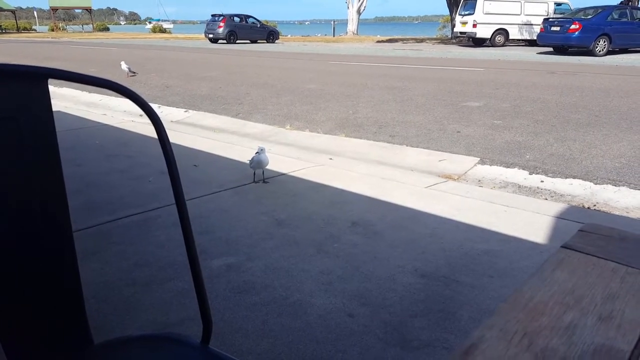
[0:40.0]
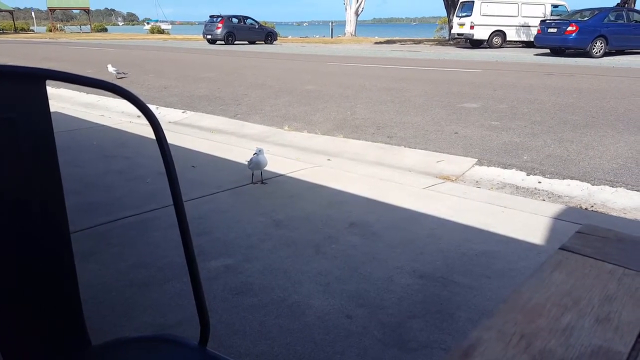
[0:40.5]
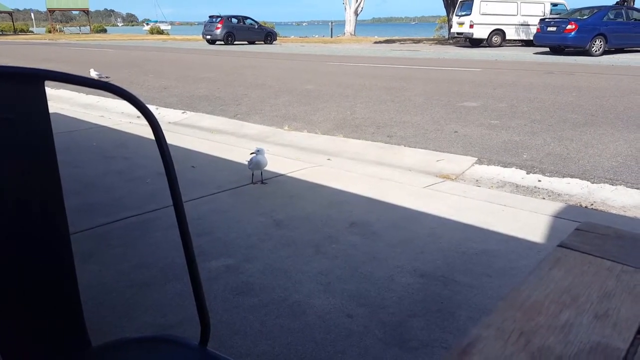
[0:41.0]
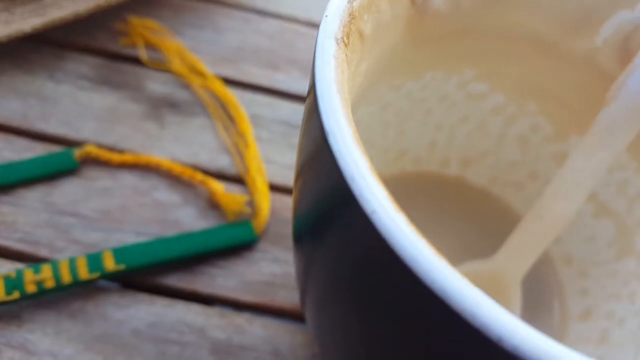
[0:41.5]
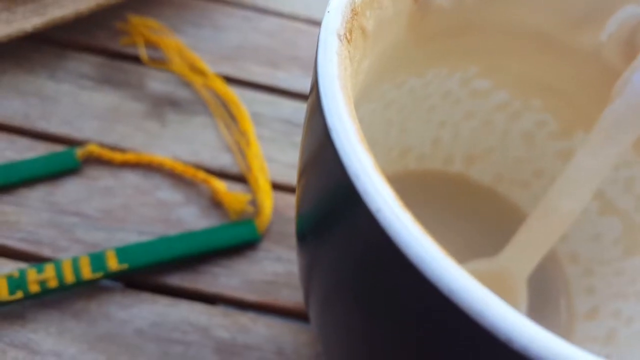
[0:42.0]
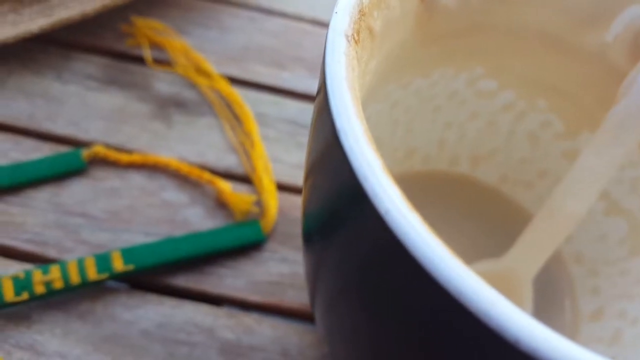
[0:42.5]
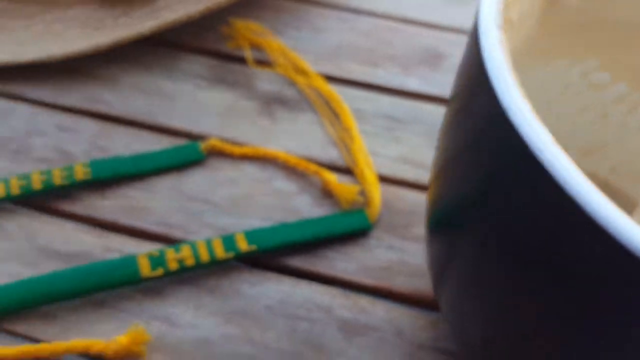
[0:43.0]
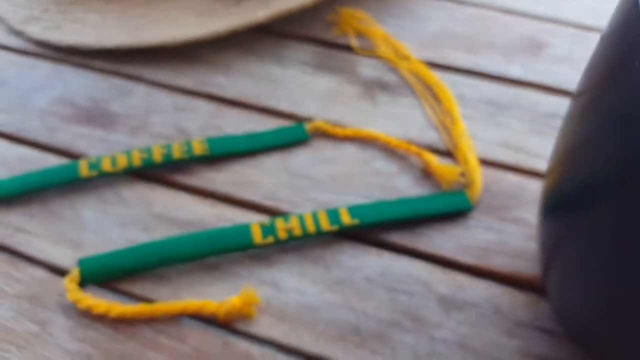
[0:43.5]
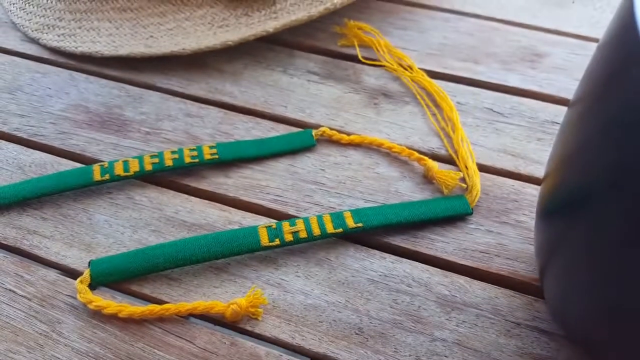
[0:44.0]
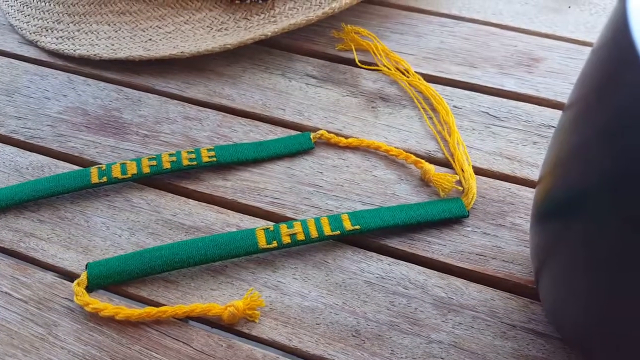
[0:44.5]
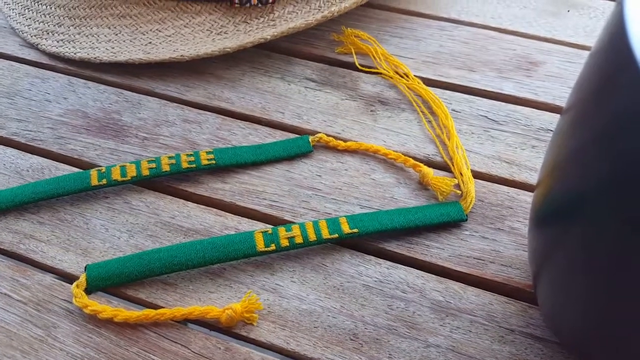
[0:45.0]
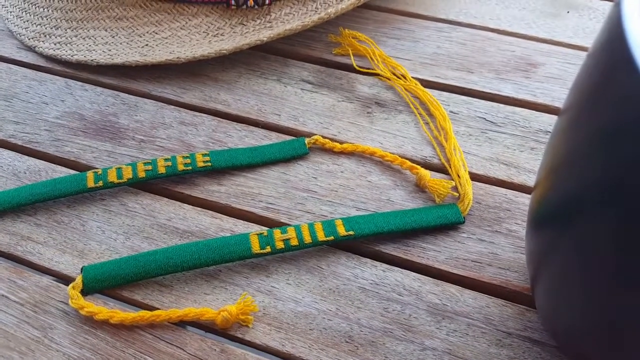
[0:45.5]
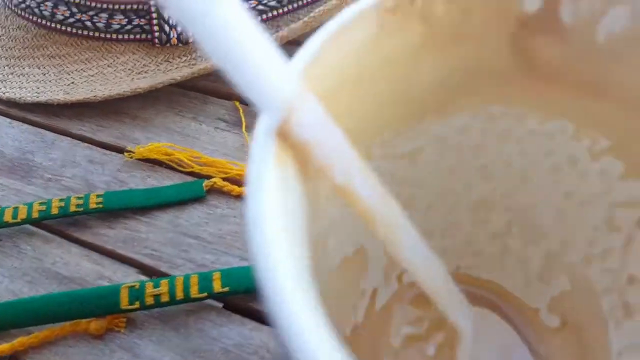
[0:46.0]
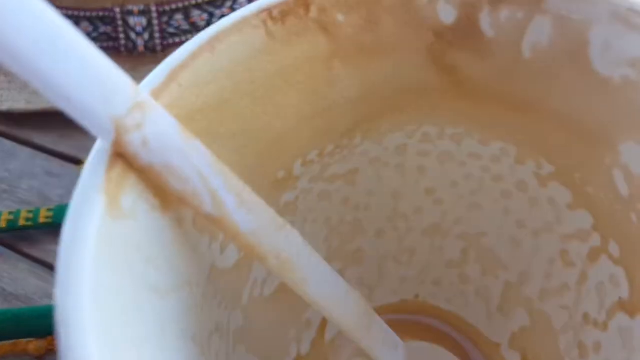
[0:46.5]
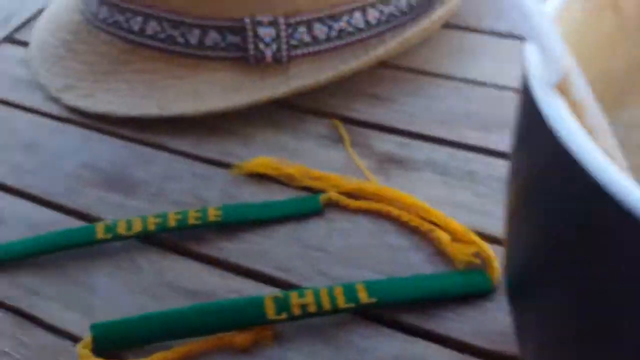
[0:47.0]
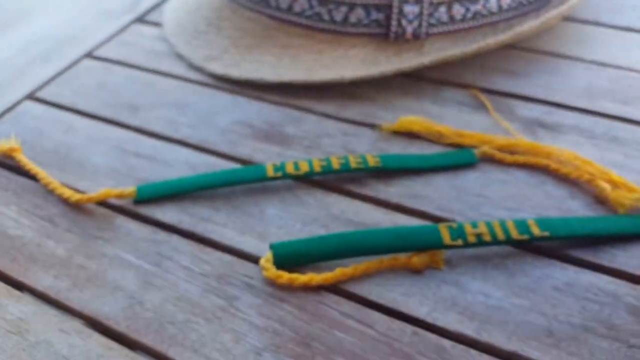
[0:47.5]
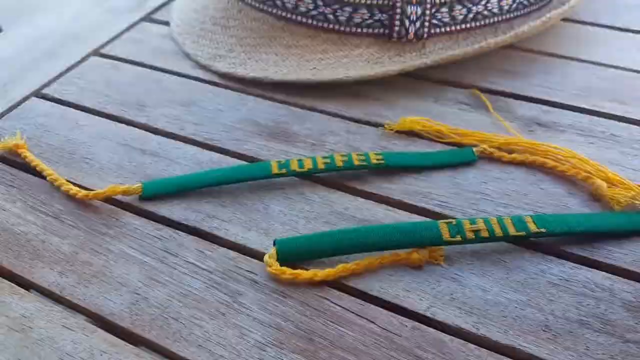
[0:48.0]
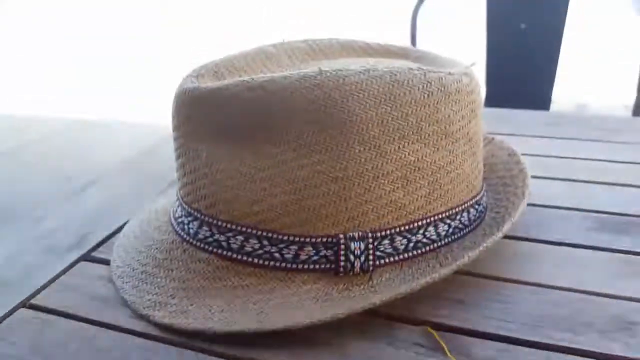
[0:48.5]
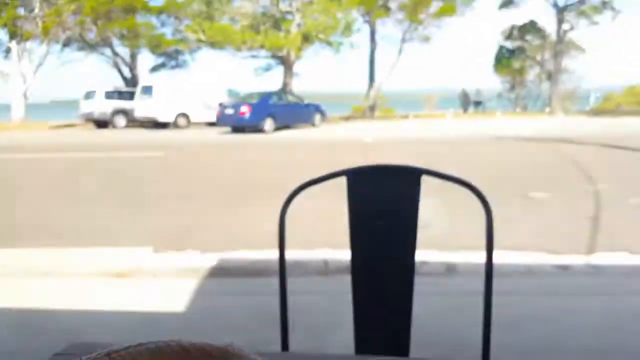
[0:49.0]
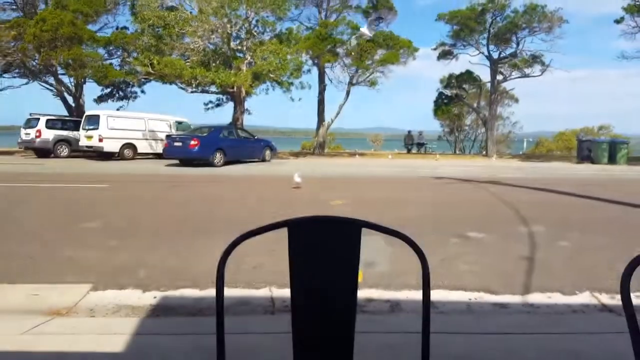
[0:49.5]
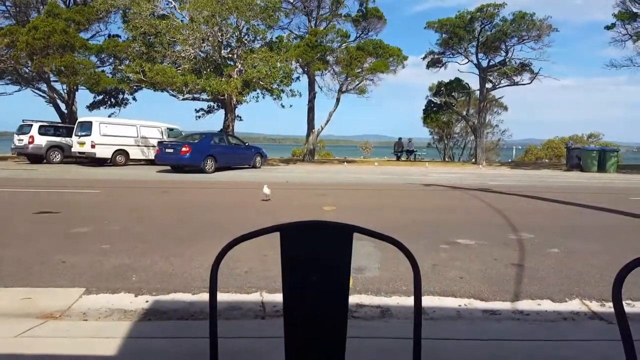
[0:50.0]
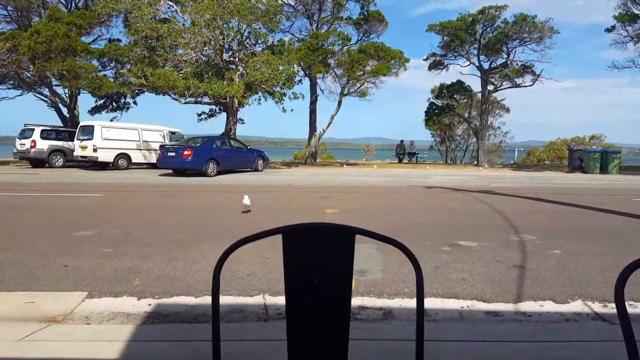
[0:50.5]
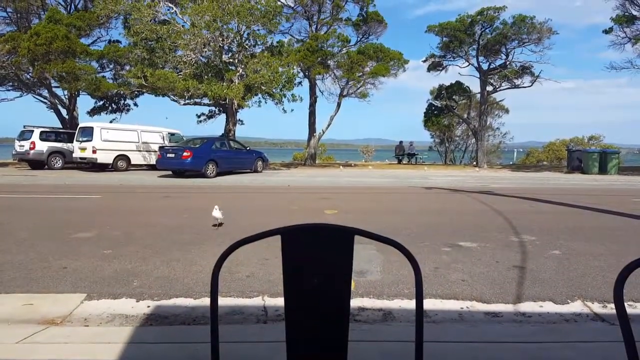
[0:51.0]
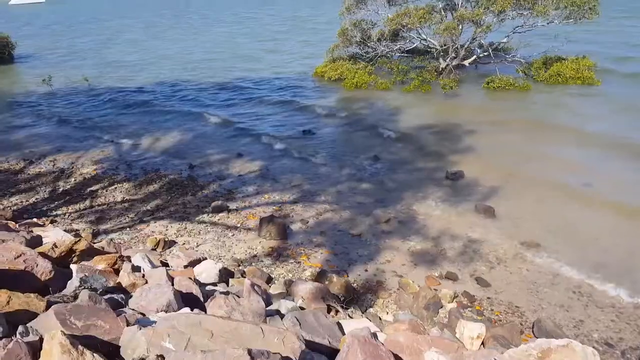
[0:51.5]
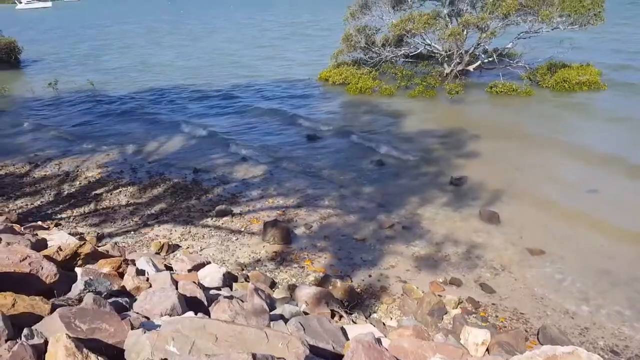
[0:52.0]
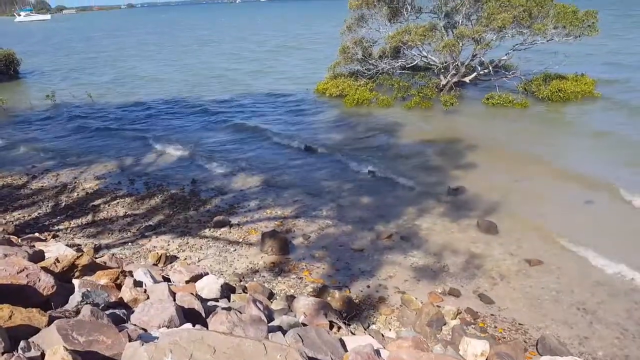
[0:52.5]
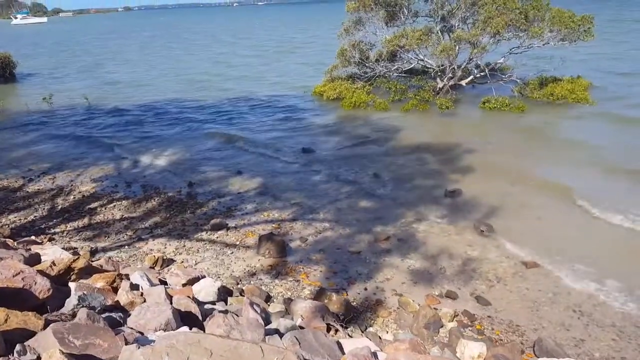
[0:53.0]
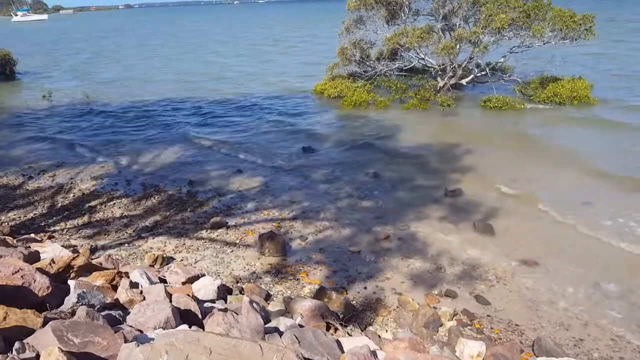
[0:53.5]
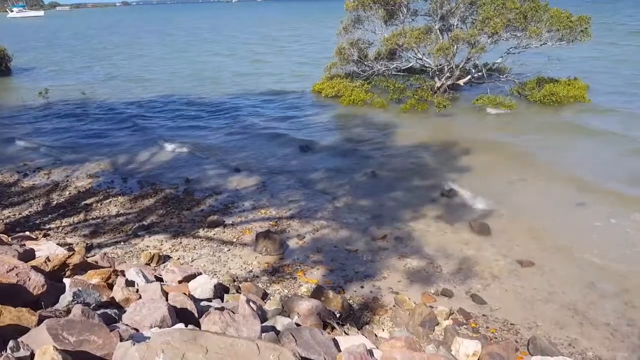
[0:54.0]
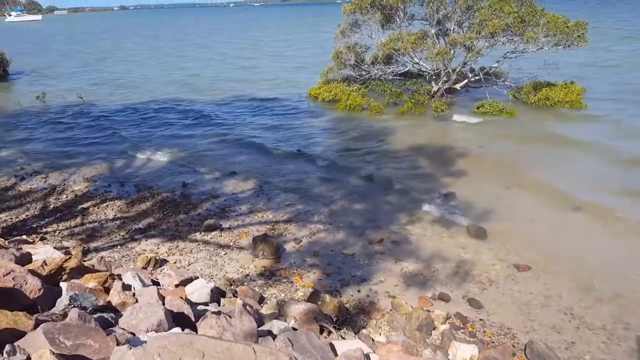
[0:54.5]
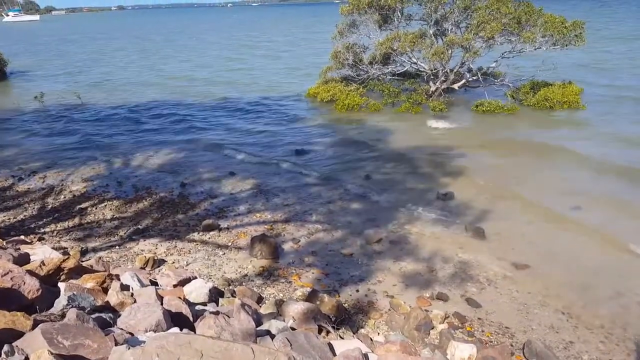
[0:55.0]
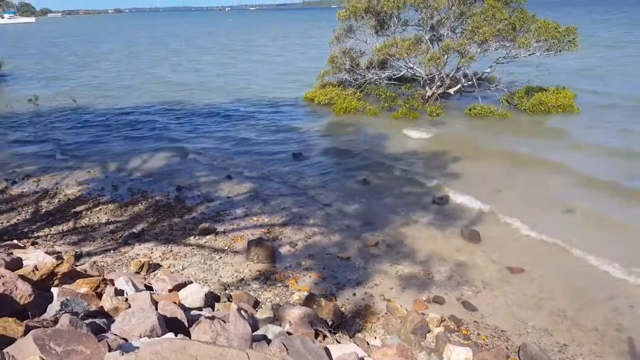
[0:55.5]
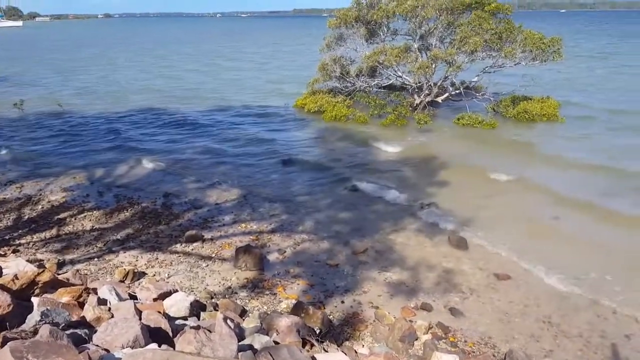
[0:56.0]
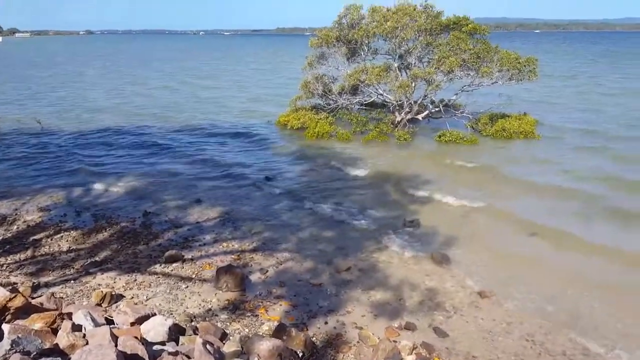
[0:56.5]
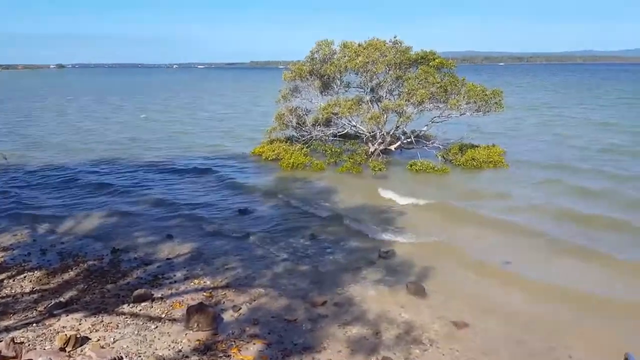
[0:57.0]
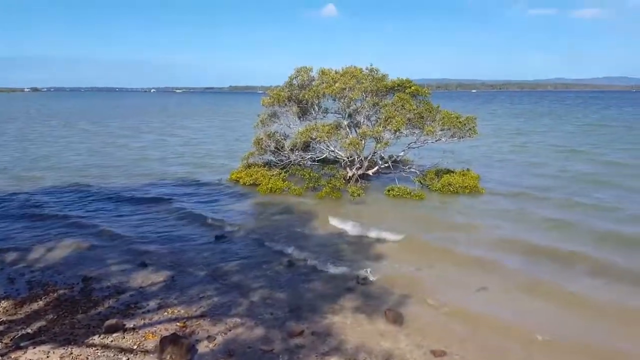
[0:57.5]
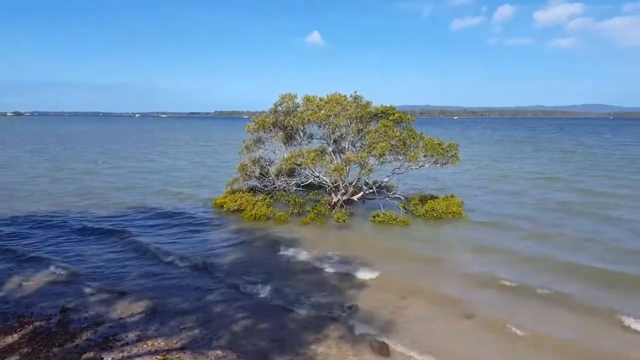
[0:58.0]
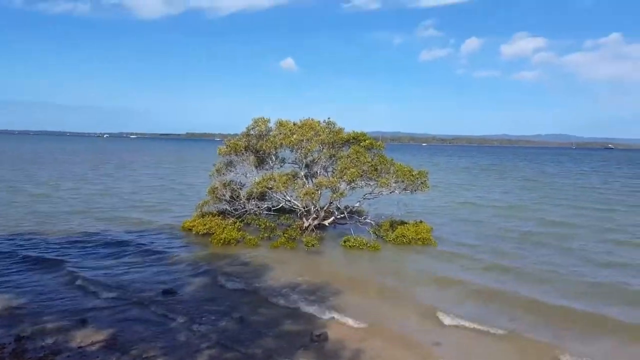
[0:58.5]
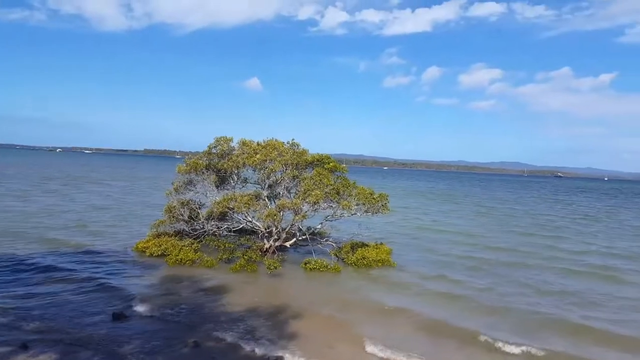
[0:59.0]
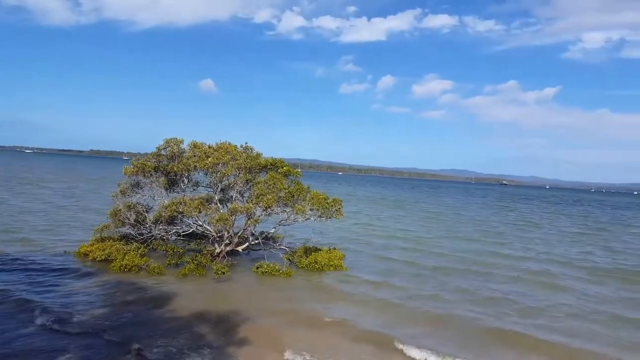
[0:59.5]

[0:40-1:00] A seagull is shown, then the scene suddenly changes and zooms into an empty black coffee cup. Next to the cup there appear to be two green tassels, one with the yellow text "coffee" and another with the text "chill". They are on a wooden table, with what looks like a straw top hat next to them. The camera pans up to show a lake in the foreground and a couple sitting on a bench staring at the lake. There look to be three cars parked: a blue sedan, a white van, and a white SUV on the left side. A lake is in the background. The scene changes to what looks like the edge of the lake, with a lot of stones at the bottom left, some sand, and light waves hitting the shore. The water is very shallow, and in the middle there appears to be the top of a tree, half submerged. The camera looks around the edge of the lake.